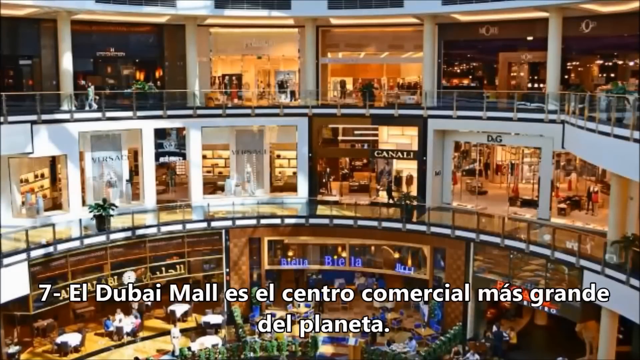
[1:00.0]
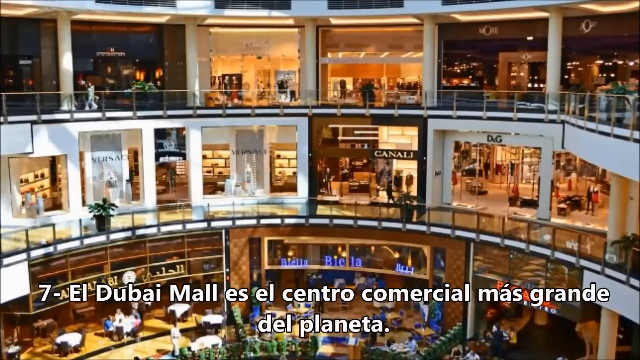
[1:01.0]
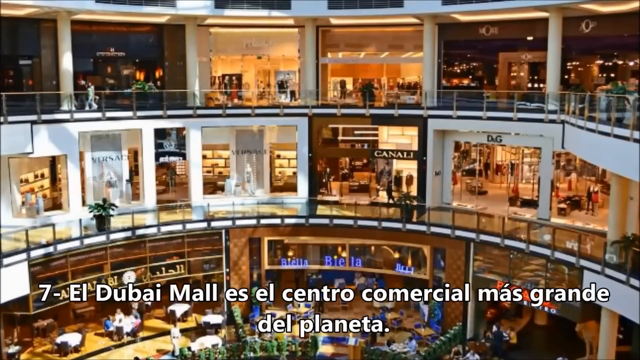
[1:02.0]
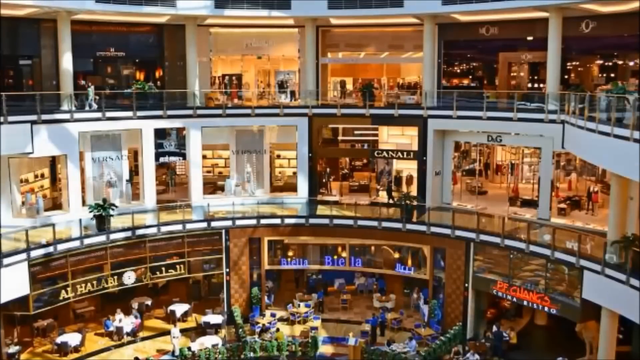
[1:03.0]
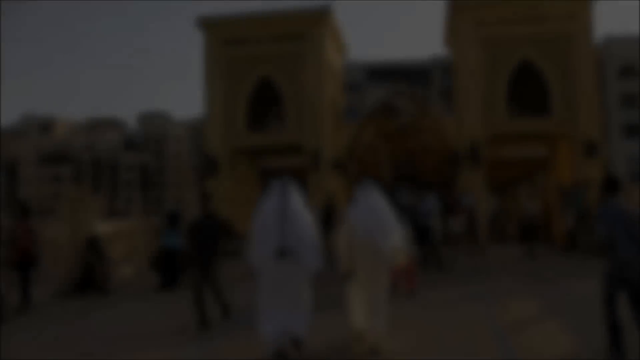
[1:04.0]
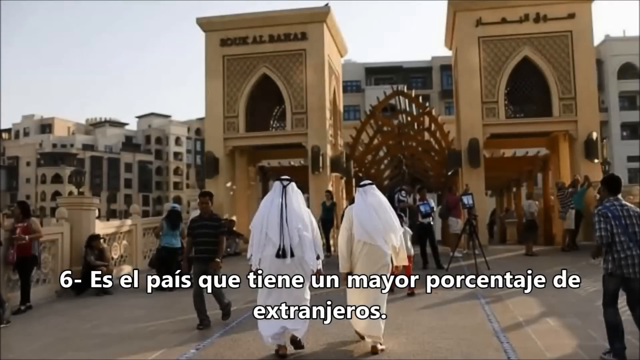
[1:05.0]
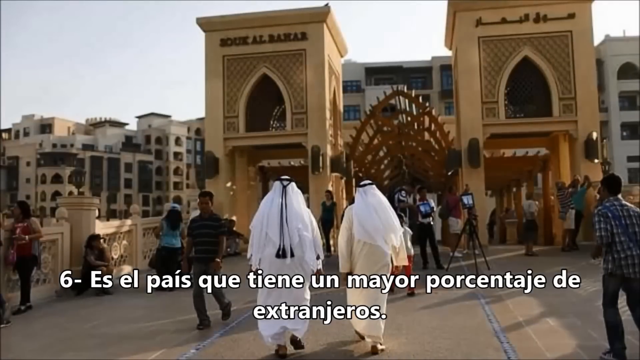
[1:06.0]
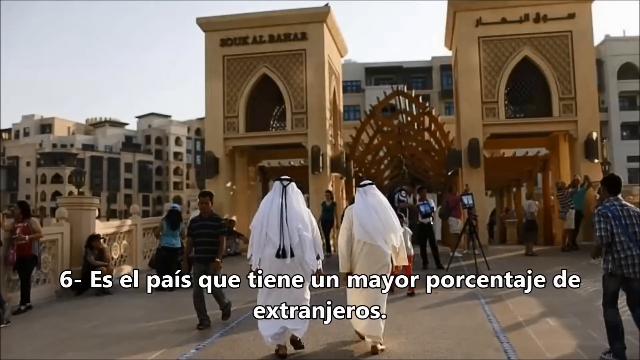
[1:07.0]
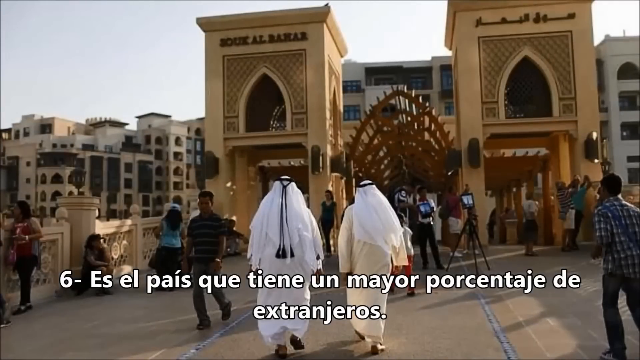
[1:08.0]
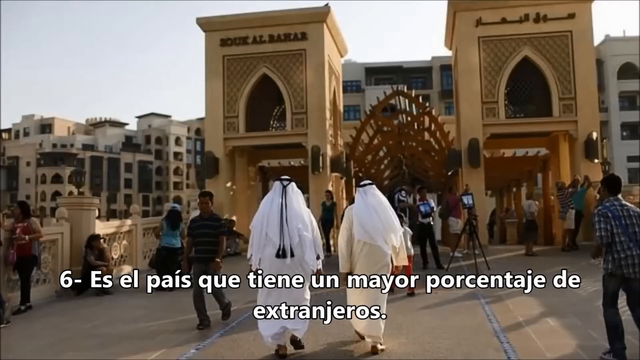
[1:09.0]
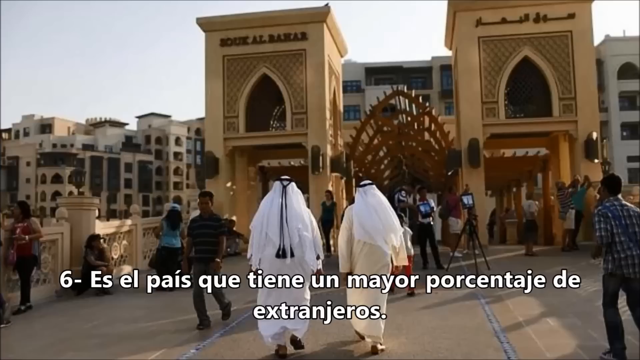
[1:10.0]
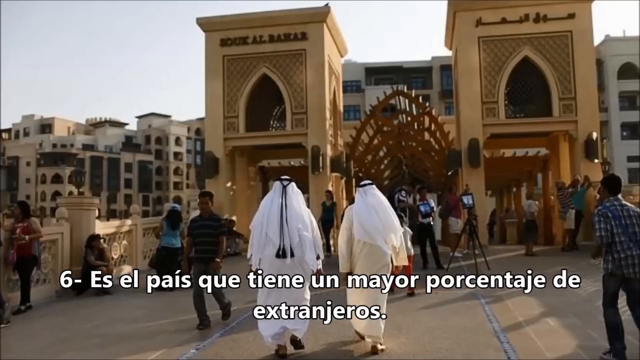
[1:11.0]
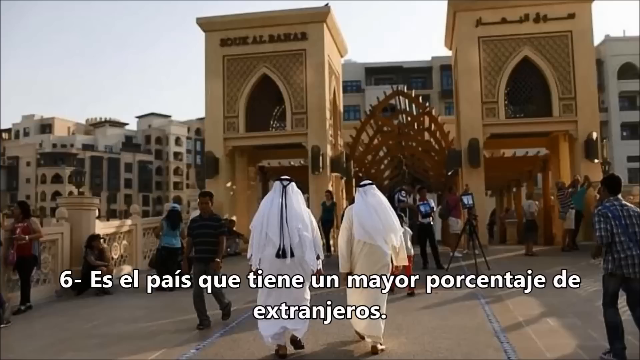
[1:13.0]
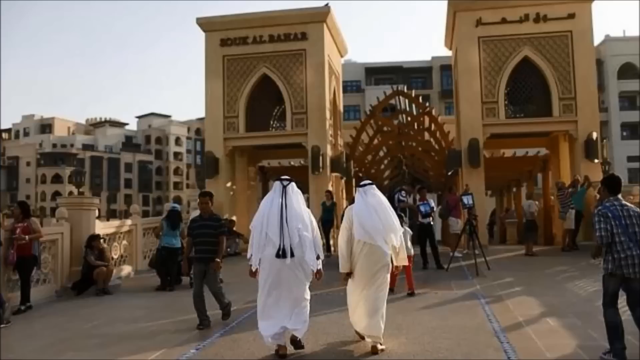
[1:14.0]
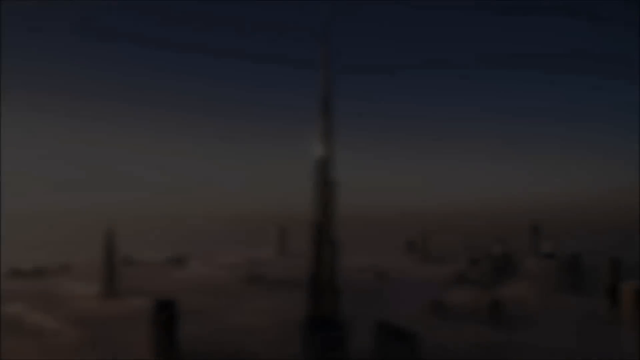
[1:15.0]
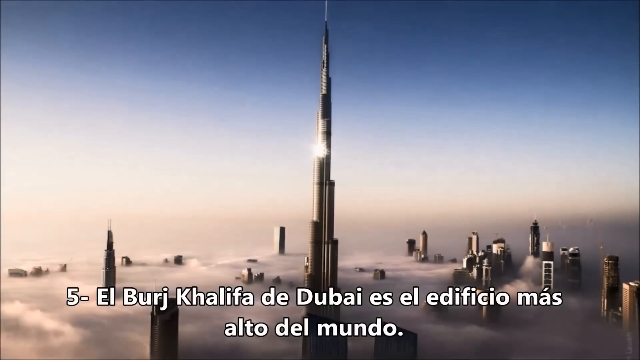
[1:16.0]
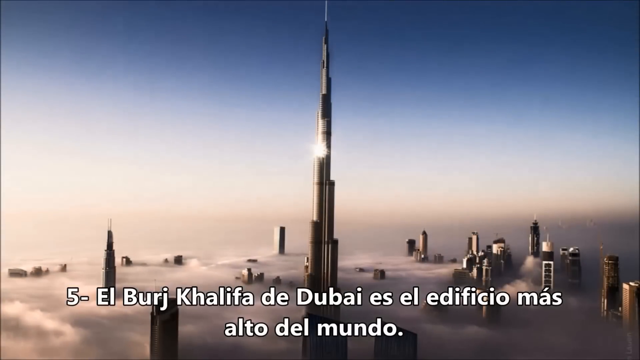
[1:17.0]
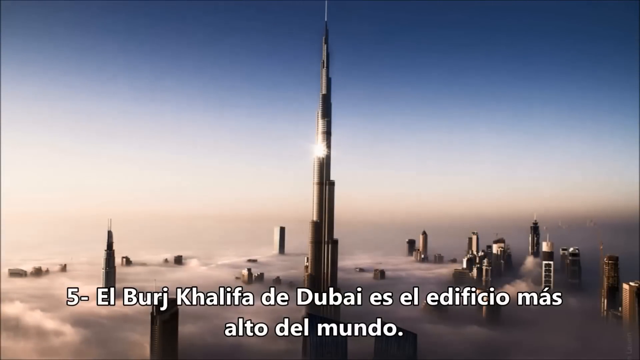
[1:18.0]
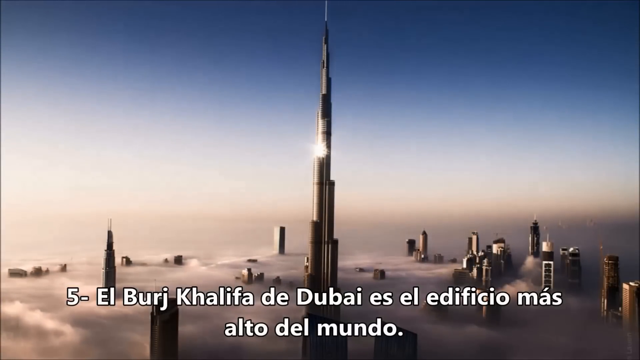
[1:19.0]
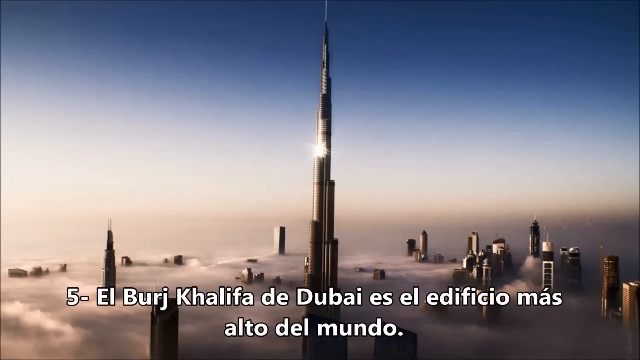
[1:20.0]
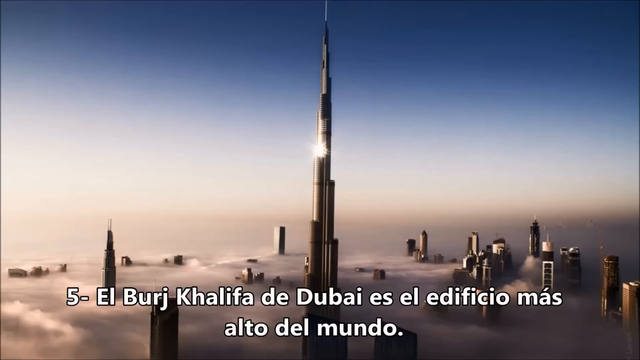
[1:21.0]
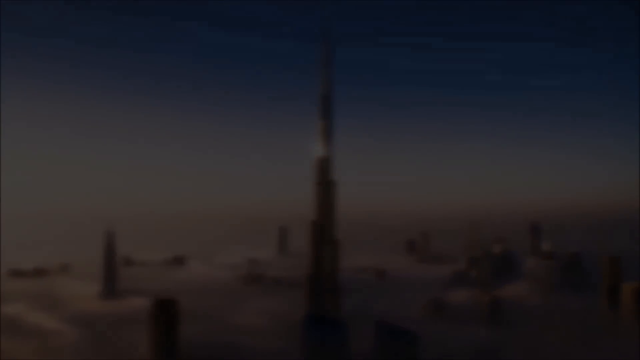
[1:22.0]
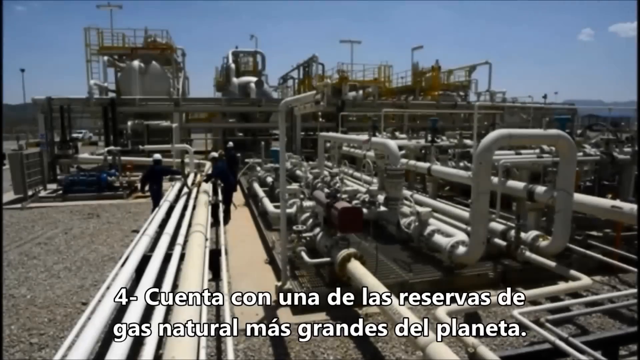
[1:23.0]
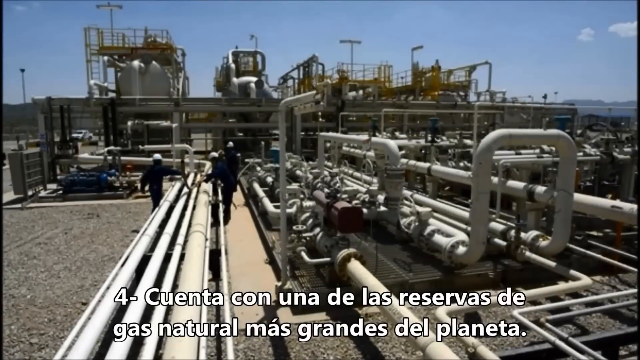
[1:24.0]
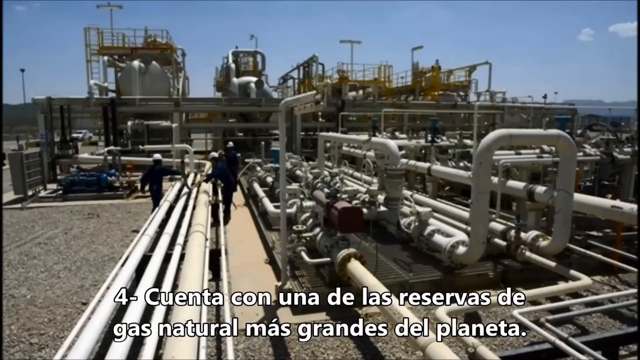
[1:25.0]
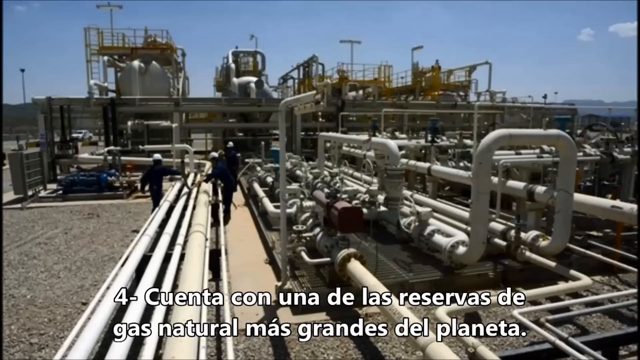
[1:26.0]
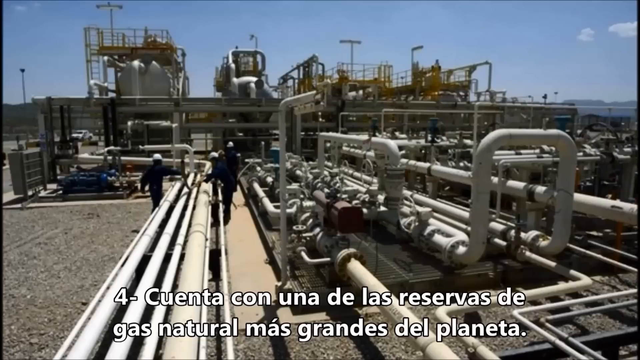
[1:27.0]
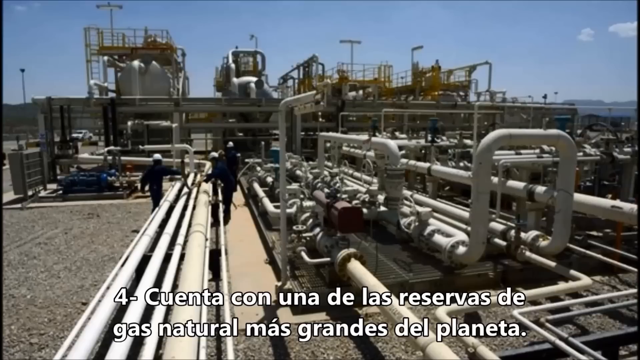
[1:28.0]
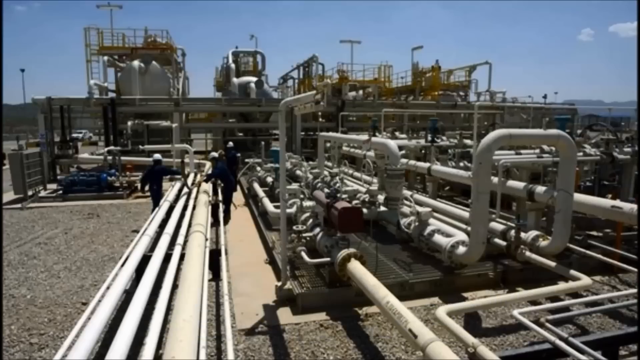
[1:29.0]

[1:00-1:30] The picture of the mall in Dubai continues; the mall looks like it has at least three floors, judging by the shops from bottom to top. The countdown continues from number 7 toward number 3. Number 7 shows restaurants in the mall. Number 6 looks like it concerns the city center or the mayor of Dubai; its picture shows a bunch of people walking to and from some sort of archway or building-like structure, some of them wearing Indian or Arab headgear. The buildings in this part have a very intricate structure. Number 5 is the Burj Khalifa, a huge skyscraper in Dubai. The text for number 4 refers to the natural gas reserves of Dubai.